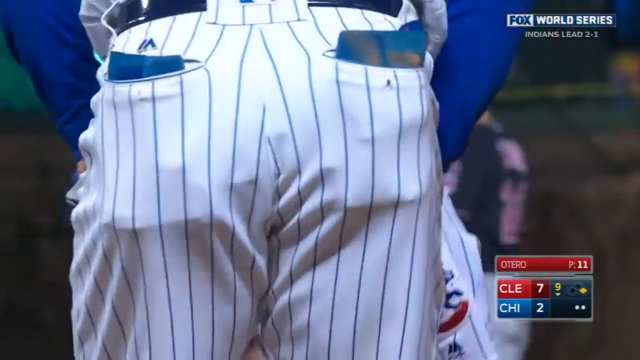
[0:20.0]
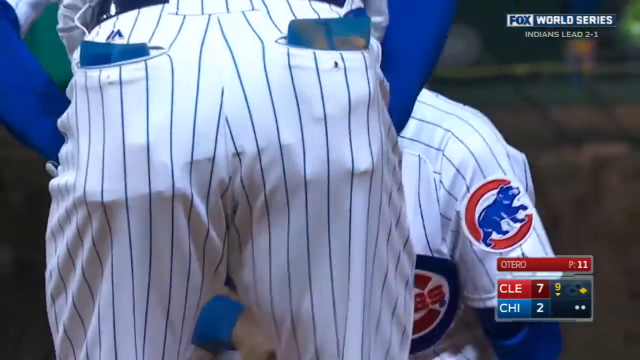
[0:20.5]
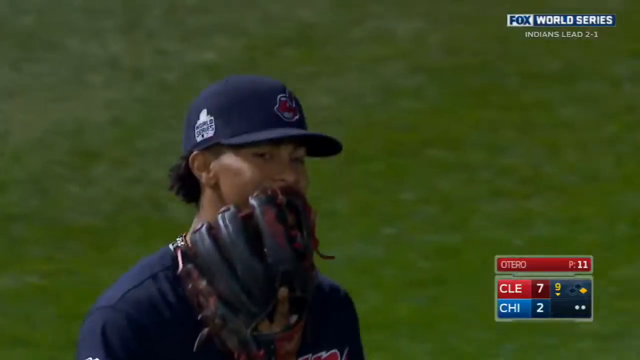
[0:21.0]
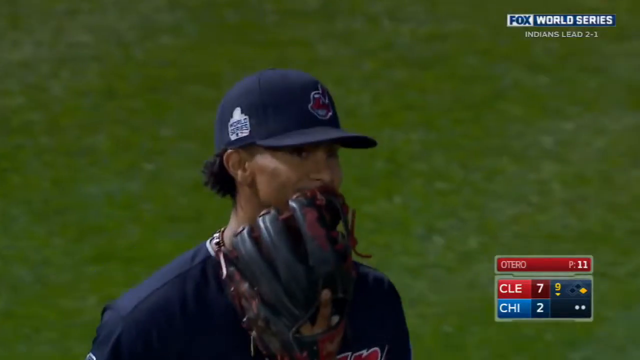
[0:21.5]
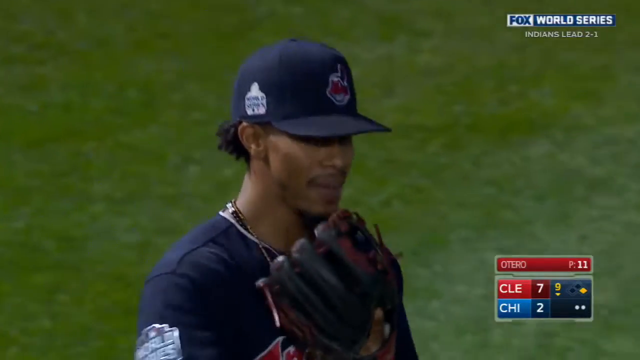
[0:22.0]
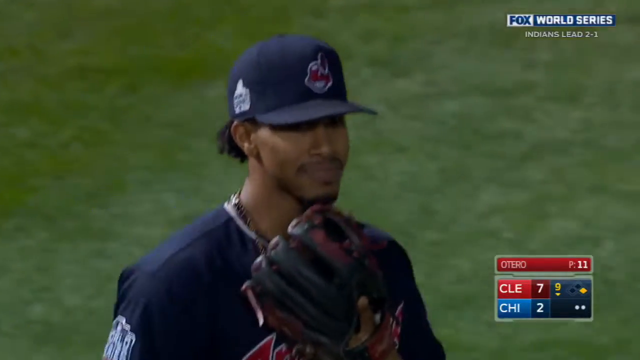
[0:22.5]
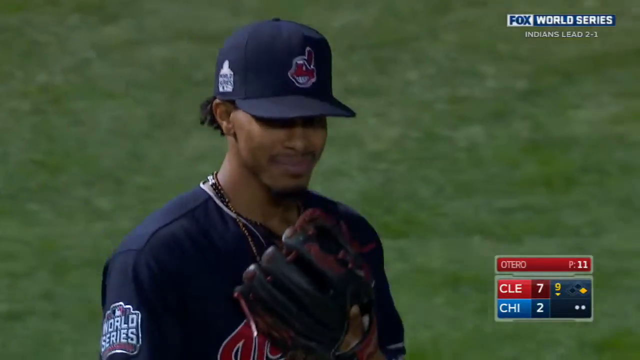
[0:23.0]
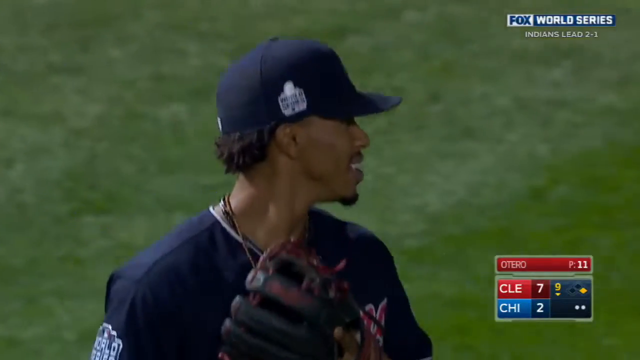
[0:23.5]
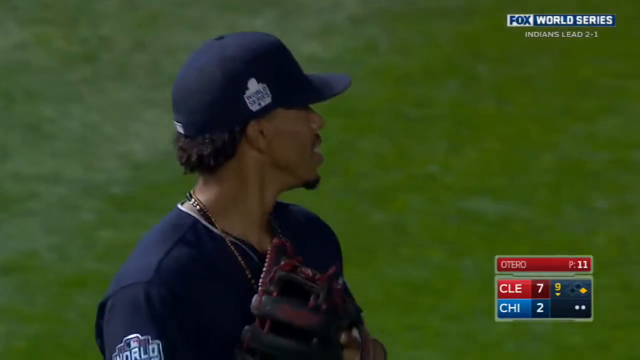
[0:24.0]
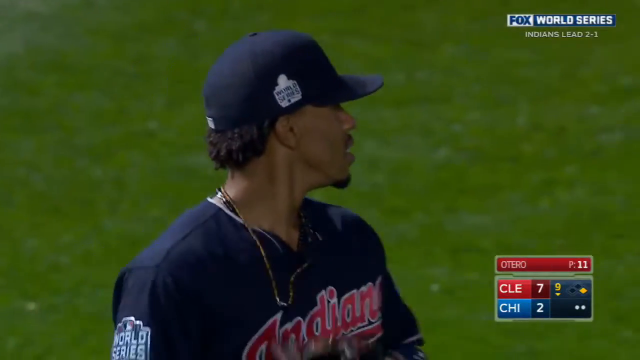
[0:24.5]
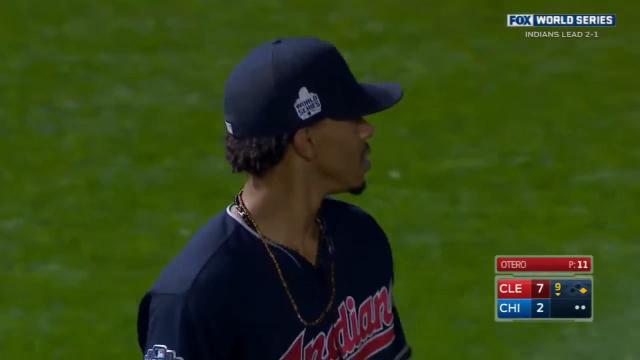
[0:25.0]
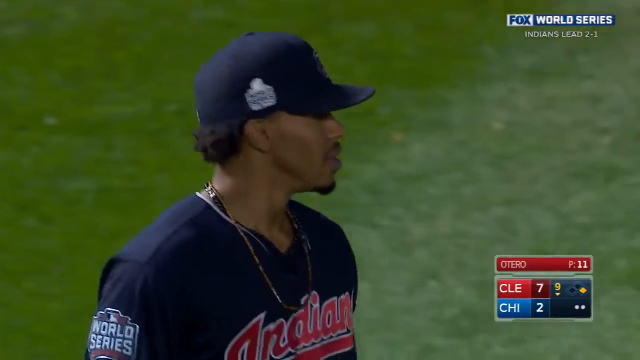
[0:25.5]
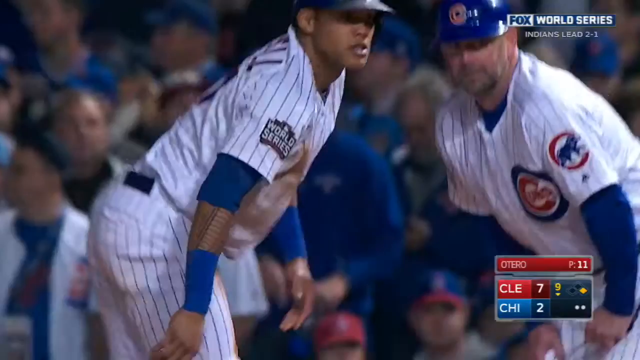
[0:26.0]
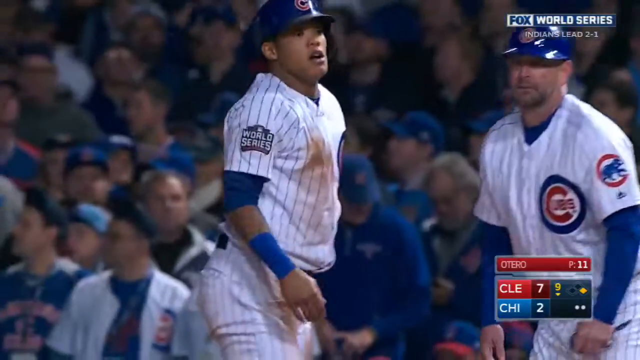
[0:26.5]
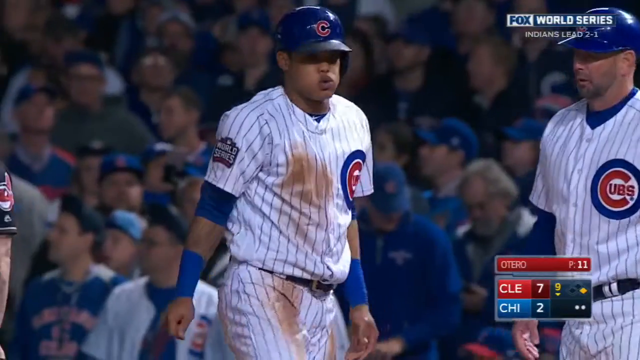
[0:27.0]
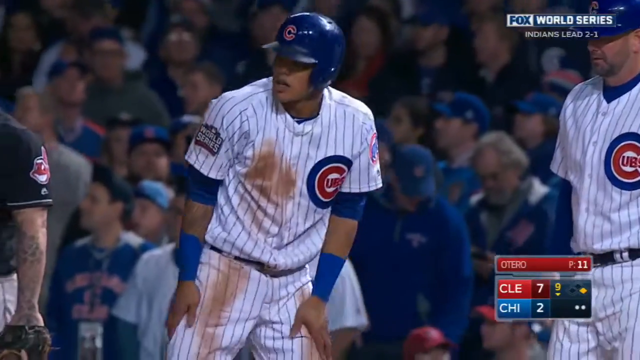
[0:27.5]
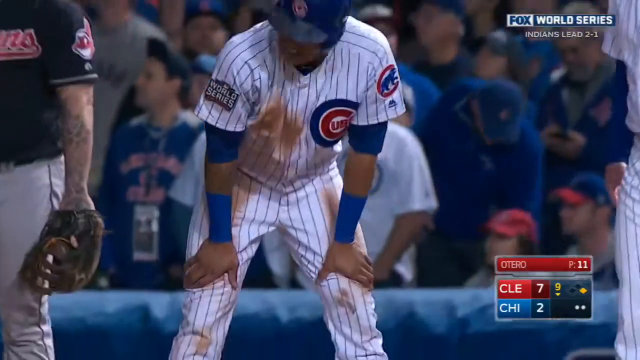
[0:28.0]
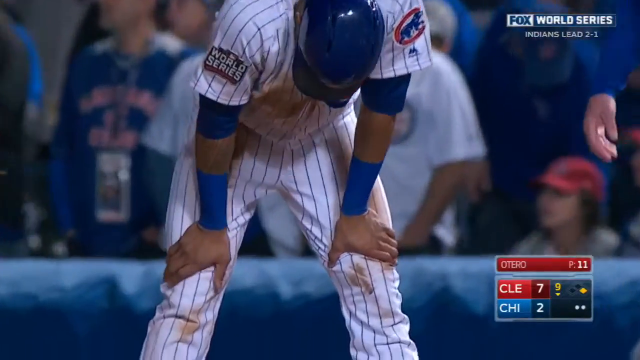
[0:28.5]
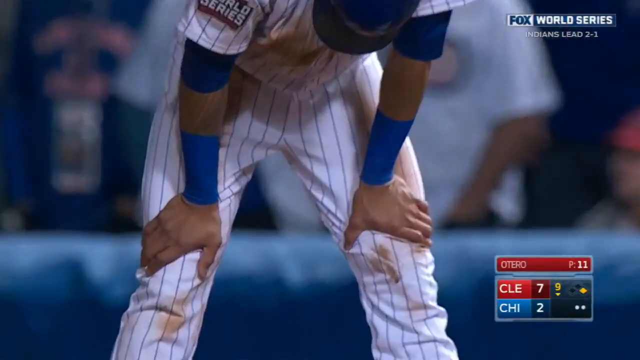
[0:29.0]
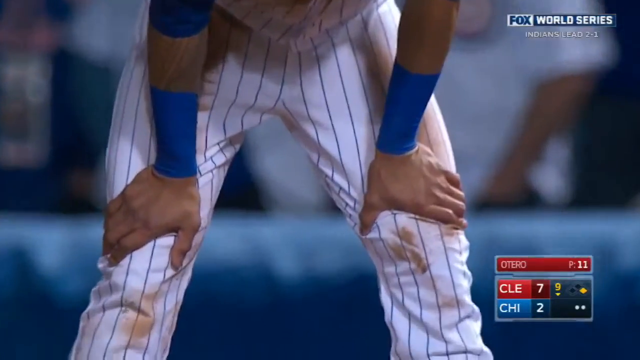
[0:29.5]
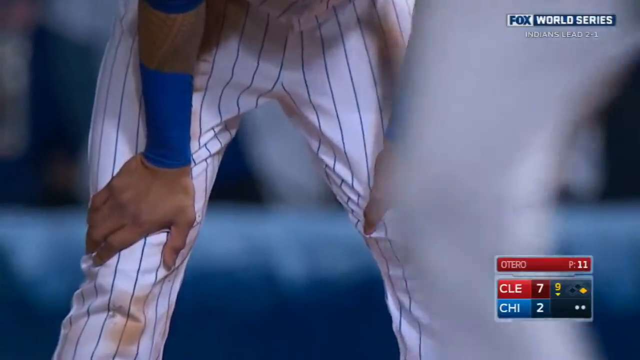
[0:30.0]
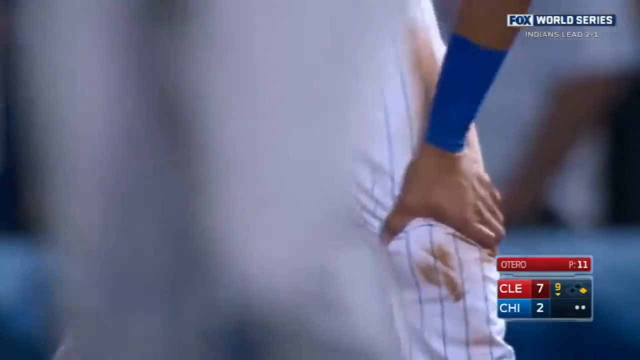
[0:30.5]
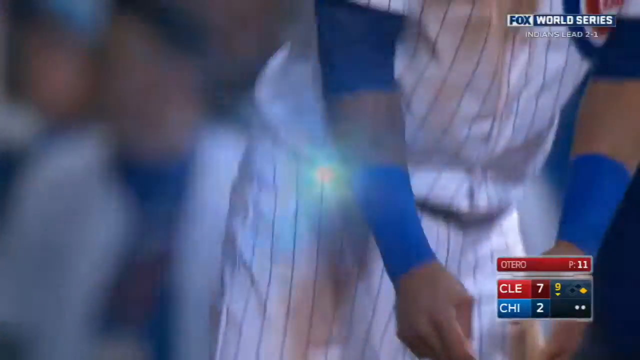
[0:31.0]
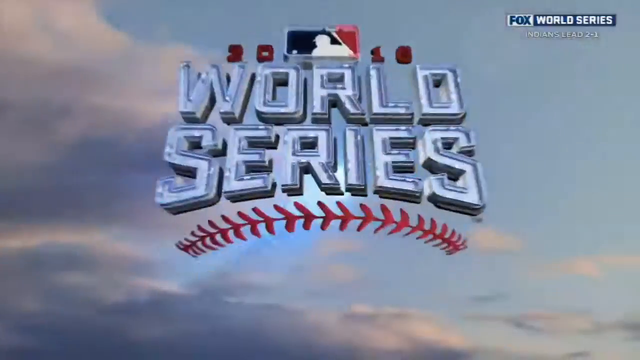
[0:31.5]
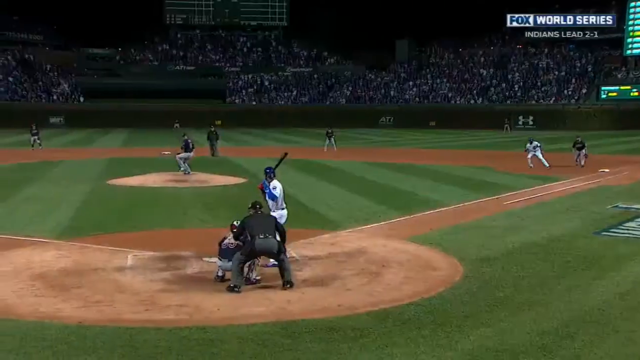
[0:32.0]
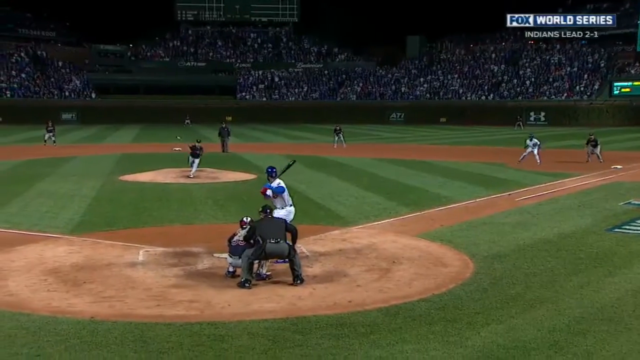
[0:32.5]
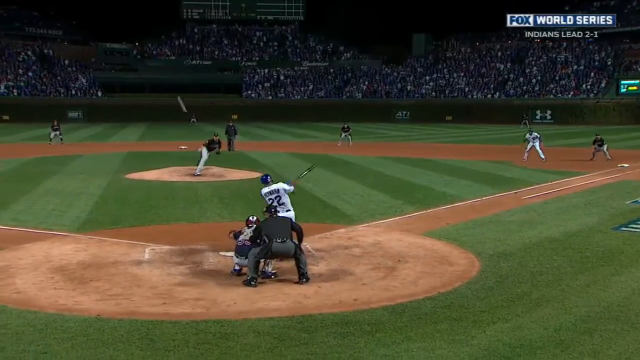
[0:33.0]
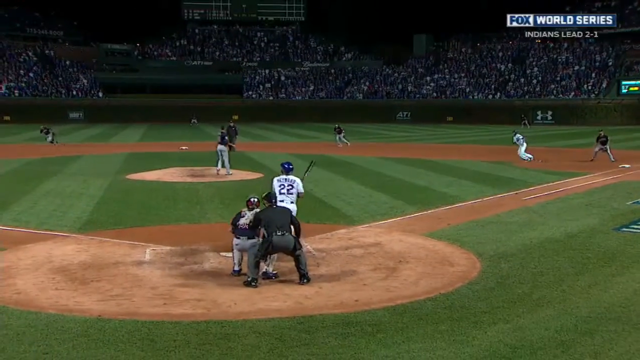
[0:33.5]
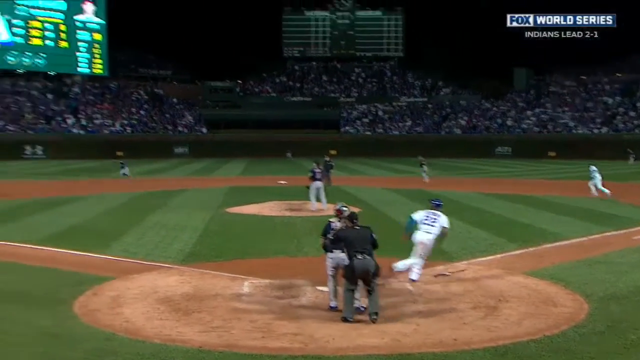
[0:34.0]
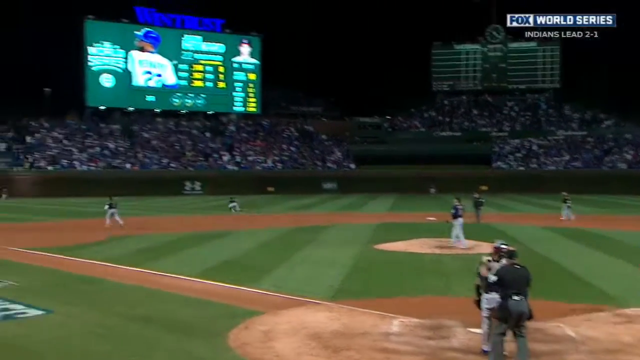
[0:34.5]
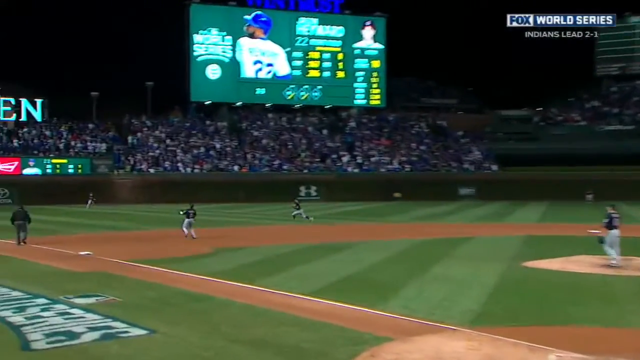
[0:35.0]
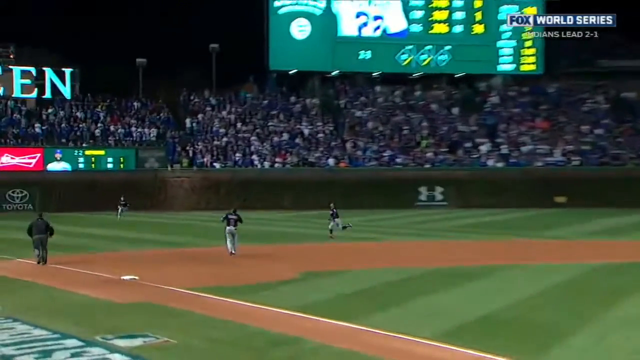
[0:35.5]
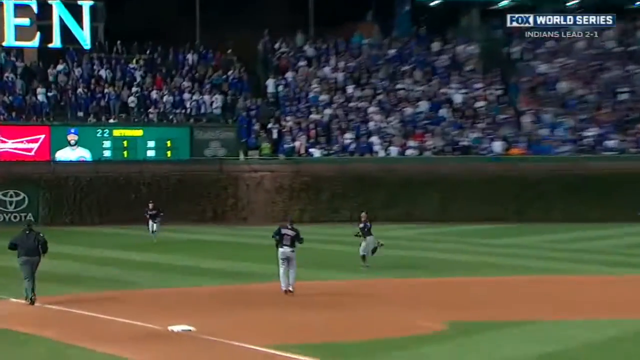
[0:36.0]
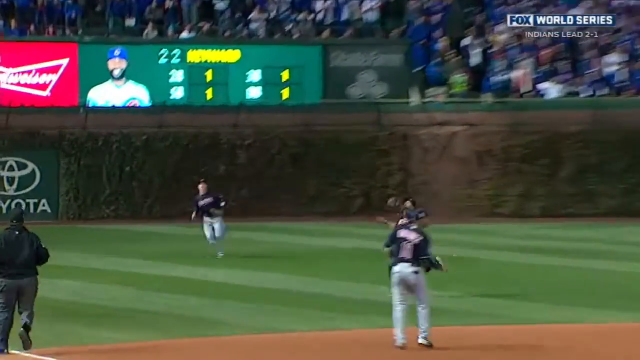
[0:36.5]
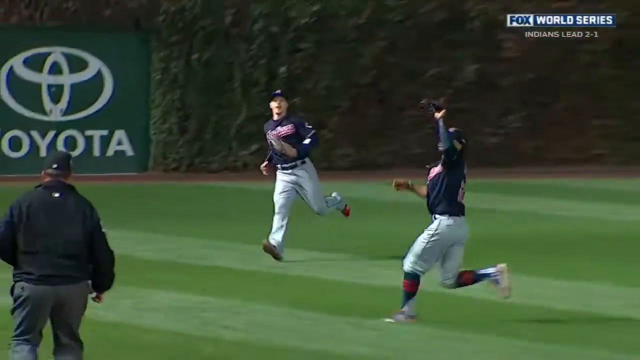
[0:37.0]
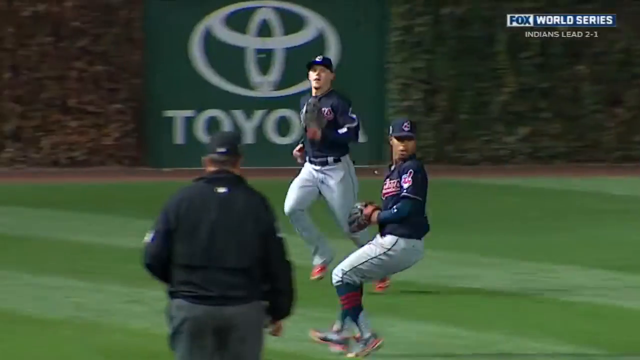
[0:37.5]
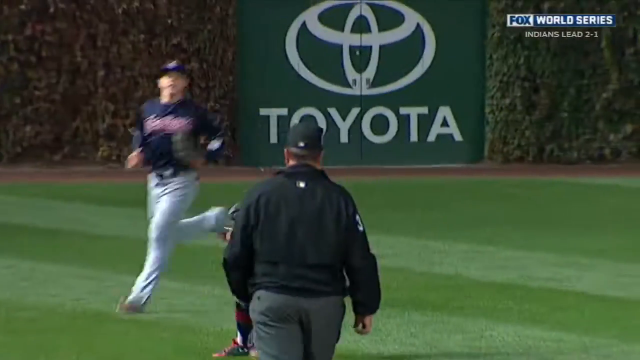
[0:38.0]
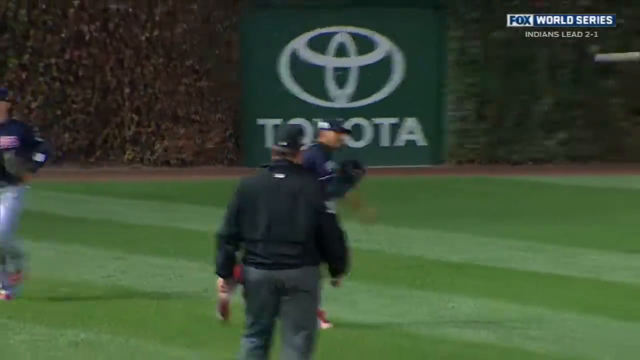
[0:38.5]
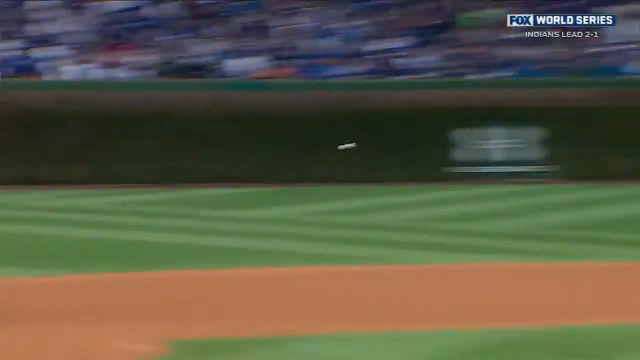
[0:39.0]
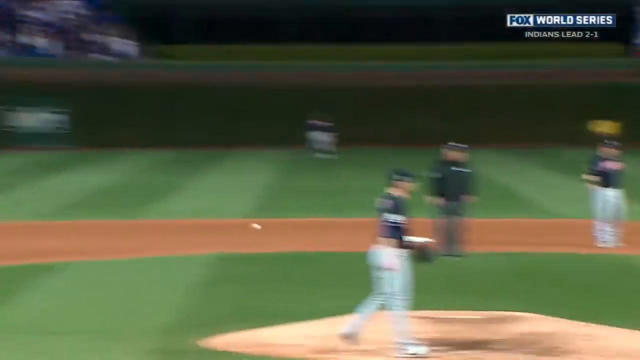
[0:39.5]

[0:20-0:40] The back of a player wearing a blue shirt and white pants is seen in a baseball match between the teams CLE and CHI on the Fox World Series. The shot cuts to another athlete walking, wearing the blue hat, and then to other players reacting to the play that just happened. A replay of the final play follows: the ball is thrown toward the athlete with the bat, he hits it, and two other people rush to catch it. After one of them catches the ball, he throws it toward the base with all his force, and the camera tries to keep up with the throw but cannot. It then shows a person wearing a black jacket, a black hat and jeans, probably a coach. The number 400 is in the background, and two other athletes walk slowly, just watching what is happening.